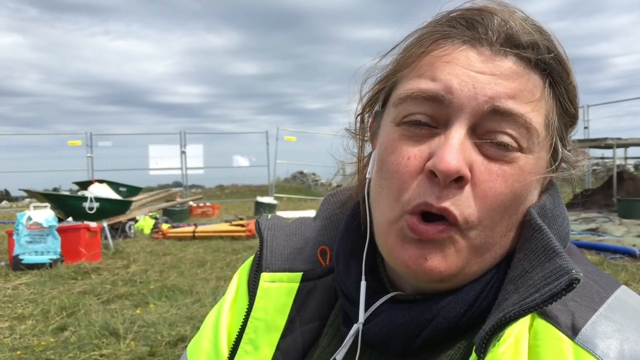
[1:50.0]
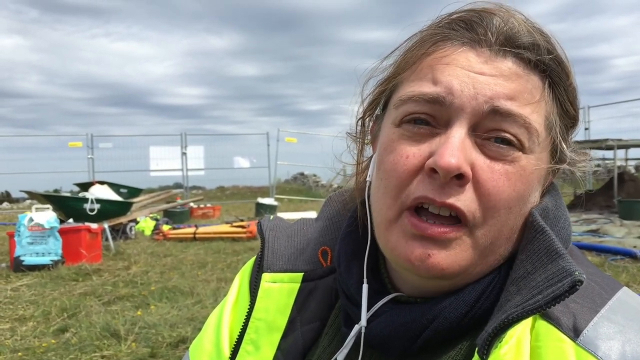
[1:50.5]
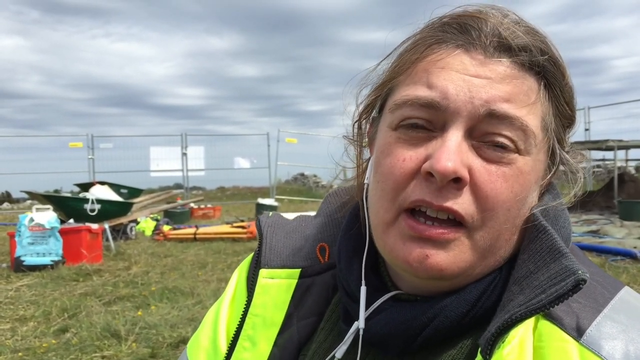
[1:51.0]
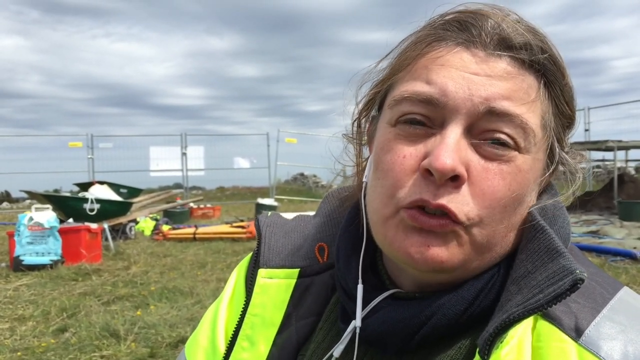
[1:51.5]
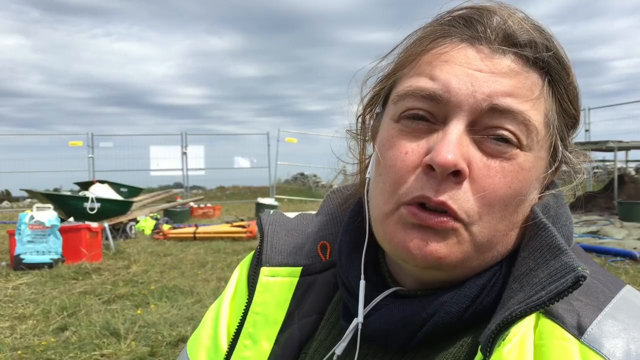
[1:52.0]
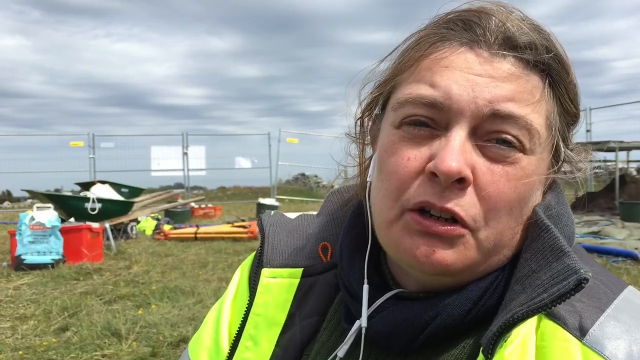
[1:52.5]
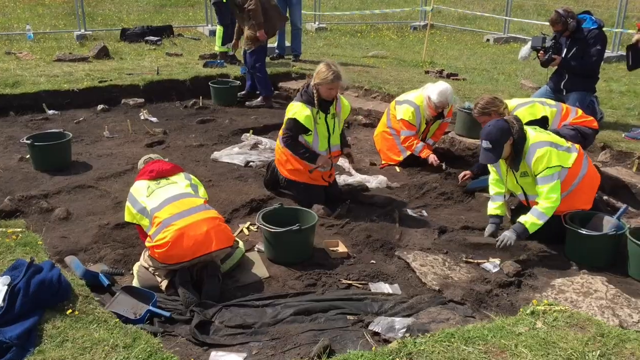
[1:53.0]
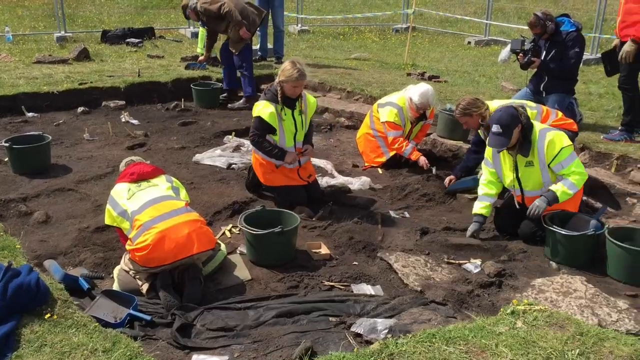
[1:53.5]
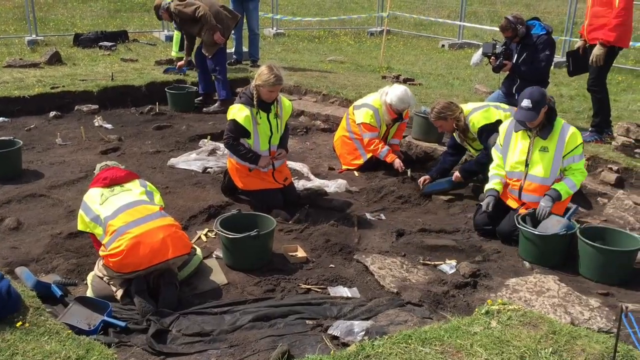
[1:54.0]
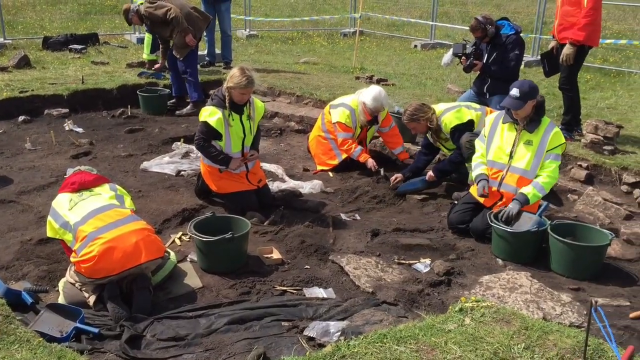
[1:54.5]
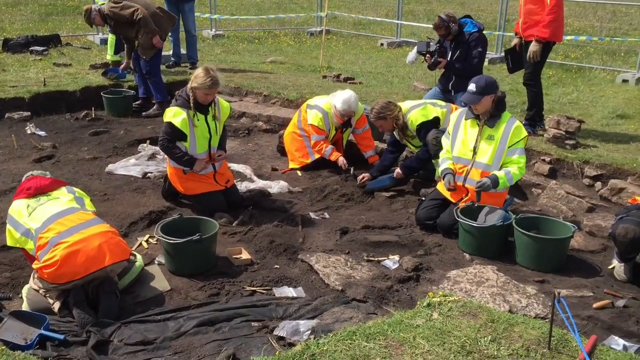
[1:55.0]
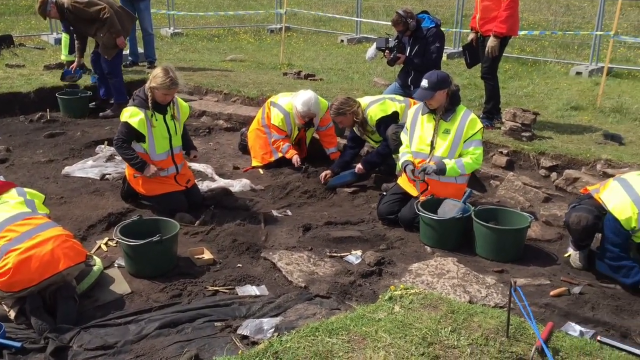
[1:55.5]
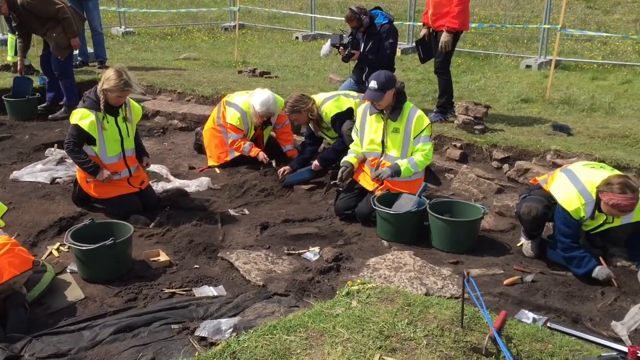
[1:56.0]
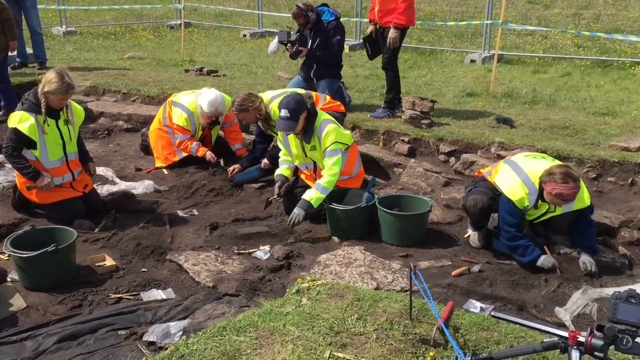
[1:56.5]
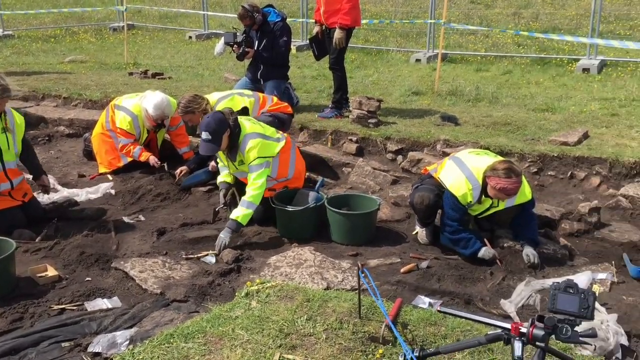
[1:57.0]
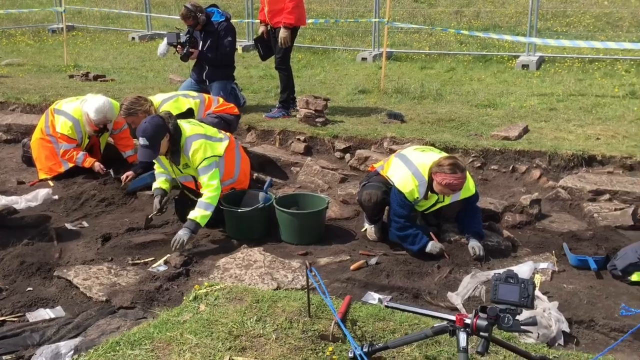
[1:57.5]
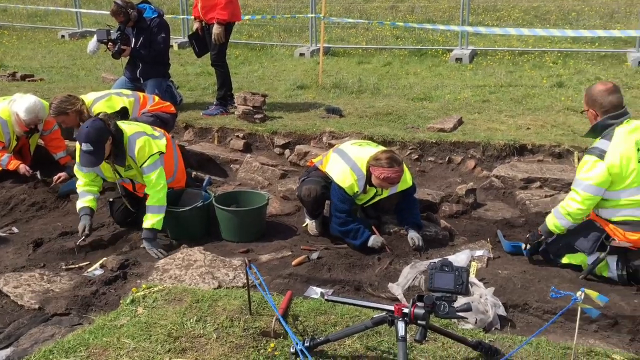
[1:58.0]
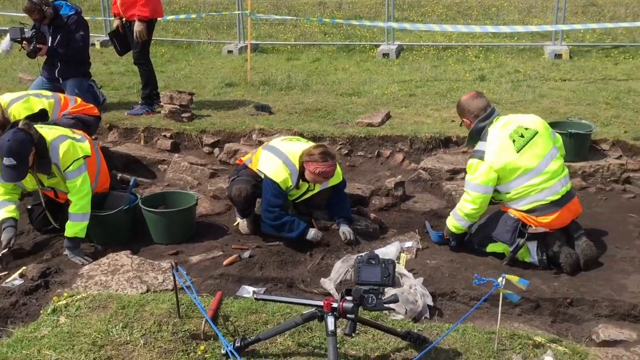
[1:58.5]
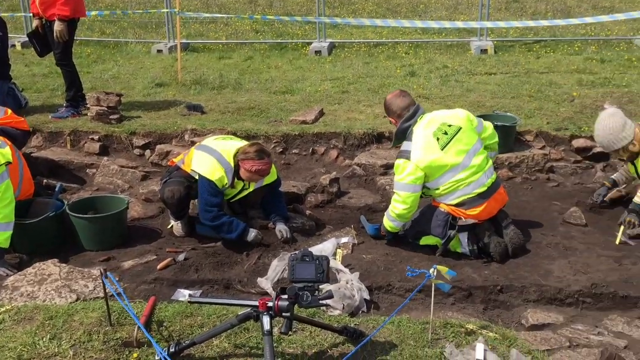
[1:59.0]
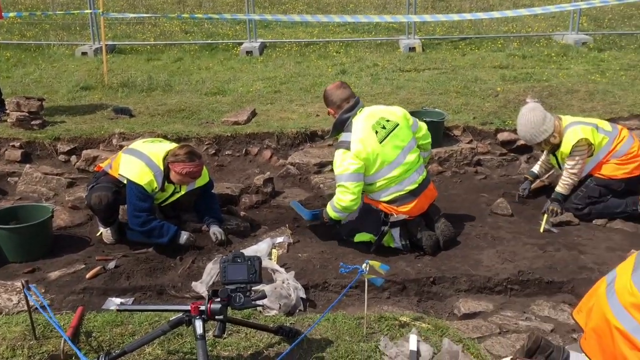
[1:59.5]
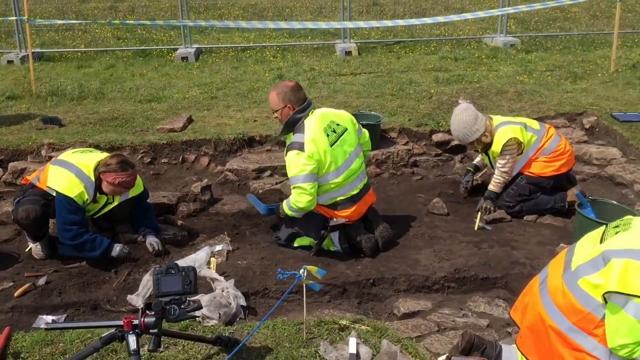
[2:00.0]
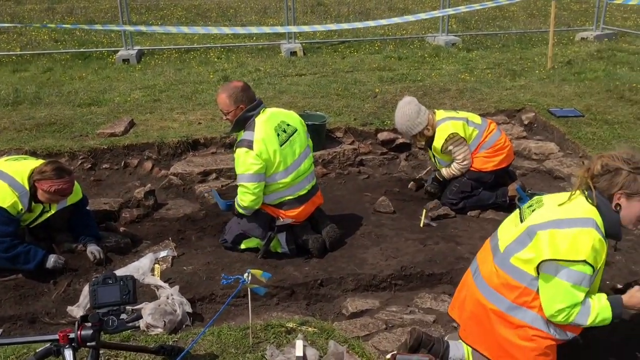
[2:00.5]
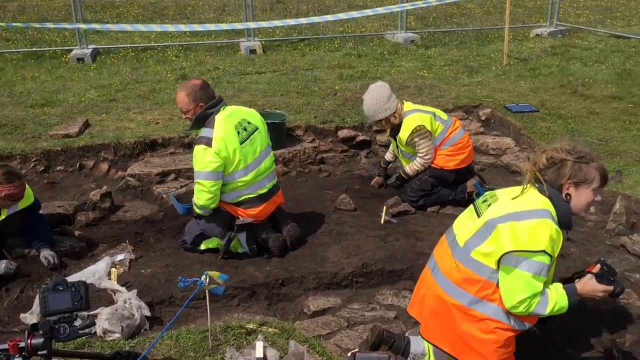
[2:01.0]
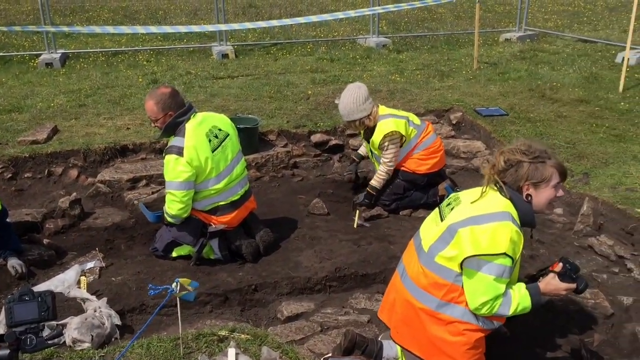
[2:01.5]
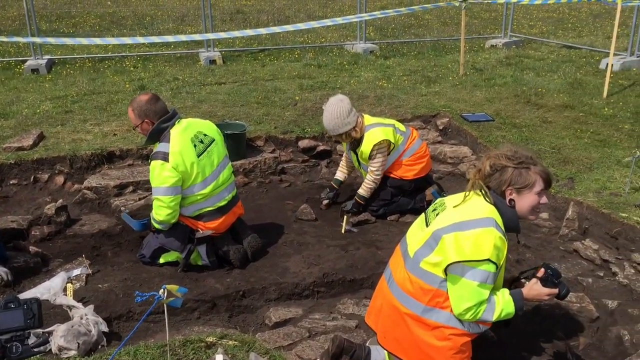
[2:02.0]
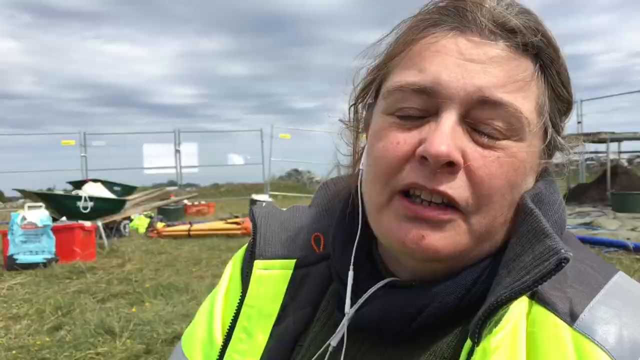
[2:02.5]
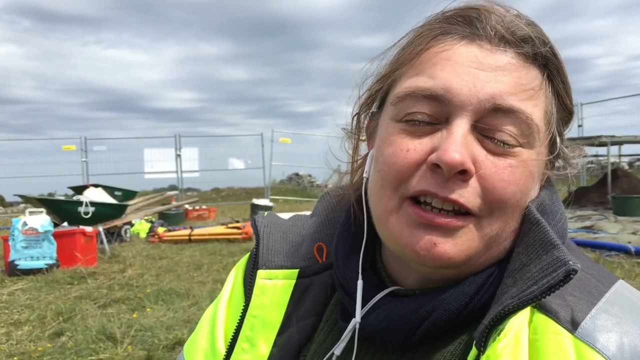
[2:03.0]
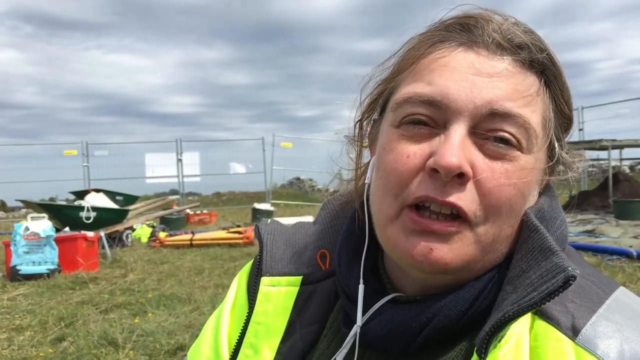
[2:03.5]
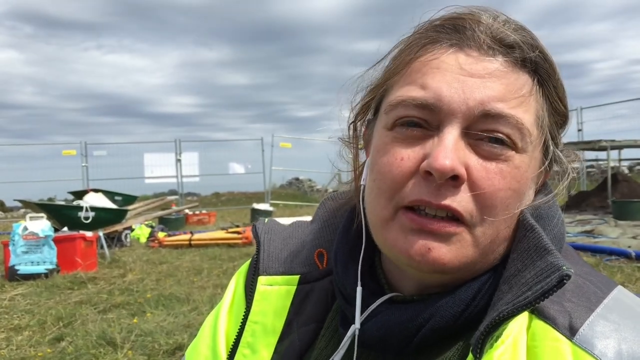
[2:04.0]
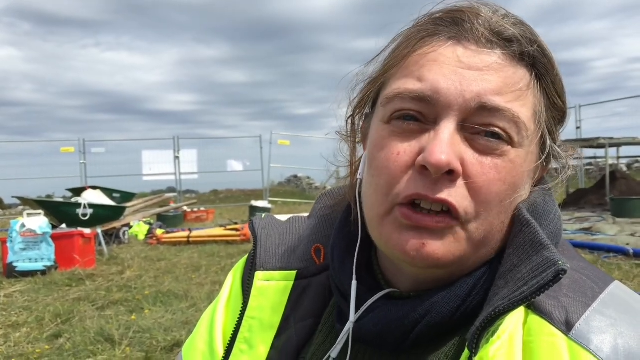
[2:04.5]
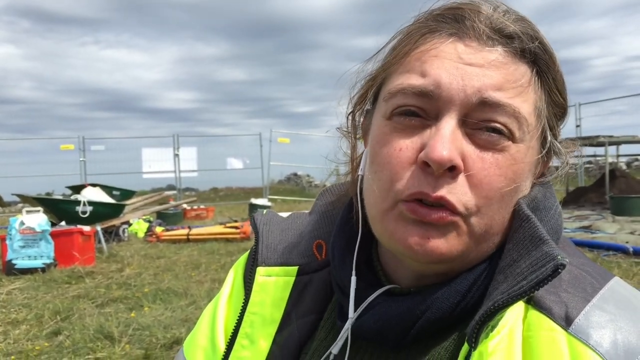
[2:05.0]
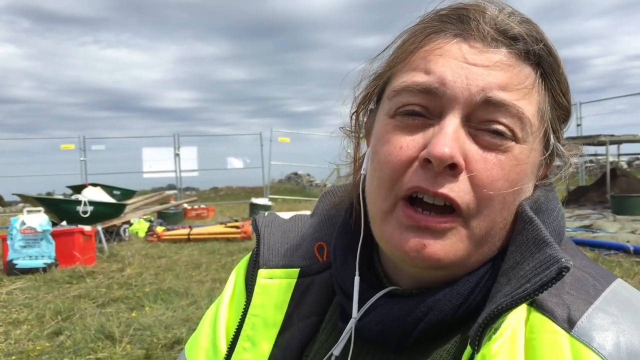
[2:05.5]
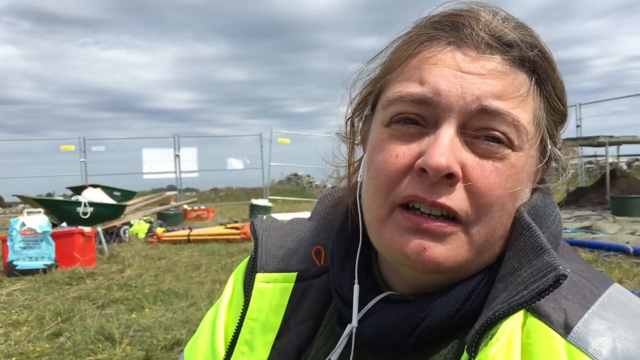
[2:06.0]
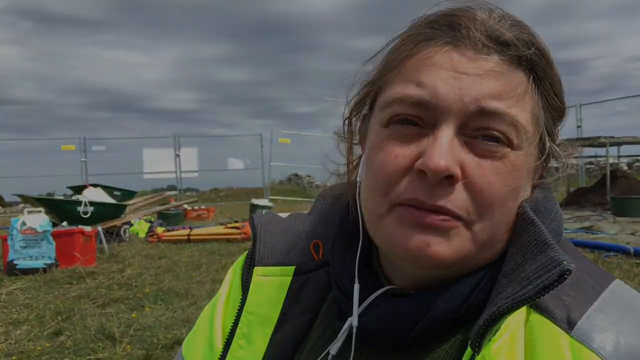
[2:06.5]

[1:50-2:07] The woman continues talking to the camera with her headphone in her ear, with the wheelbarrow and bucket behind her; it is still windy, and there are still fences behind her and clouds in the sky. Next, people are still excavating: around 10 people, some in plain clothes and some in yellow and orange high-vis jackets. A cameraman in the background is videoing and taking pictures of the people excavating. The people put their dirt in green buckets, some use small brushes to brush away dirt, and they also use blue shovels to remove dirt. Multiple rocks are set in the ground. The video then goes back to the woman talking directly to the camera. Someone in a red jacket with a clipboard is in the background, and people use bigger brushes to brush away most of the dirt. Some people wear caps and some have glasses, and a woman with a camera takes pictures of someone doing the work in the corner.